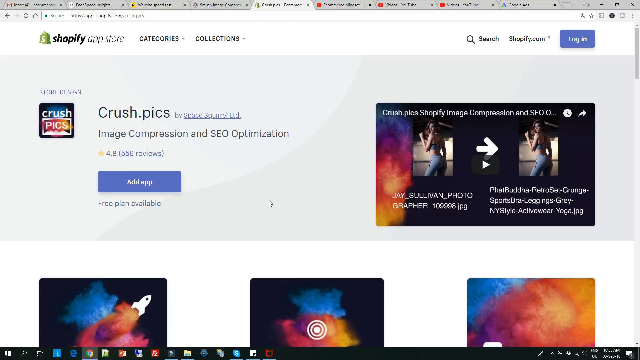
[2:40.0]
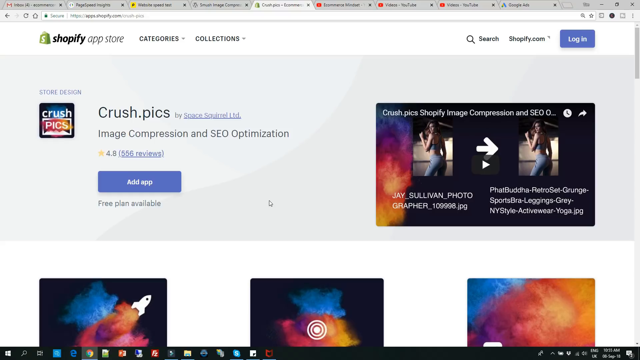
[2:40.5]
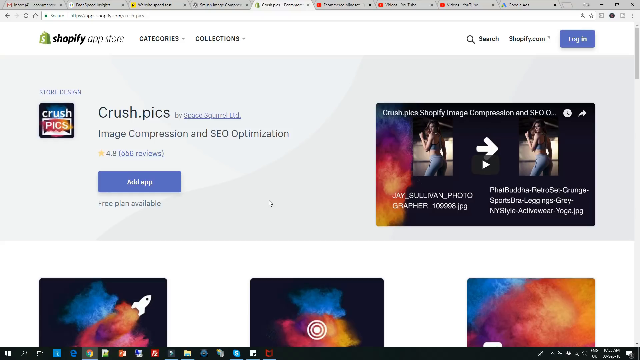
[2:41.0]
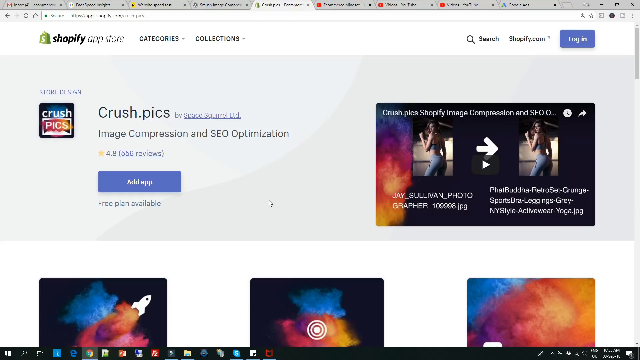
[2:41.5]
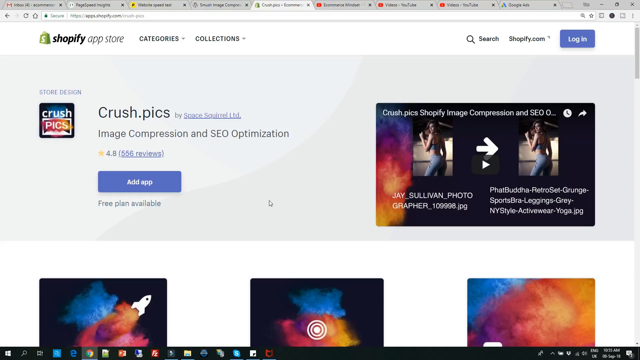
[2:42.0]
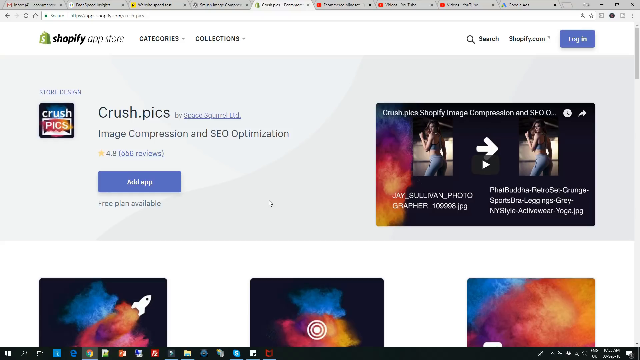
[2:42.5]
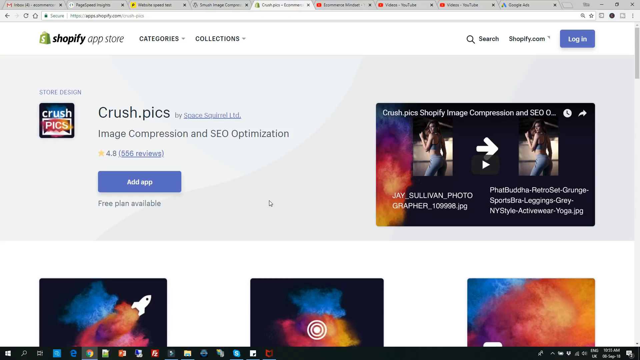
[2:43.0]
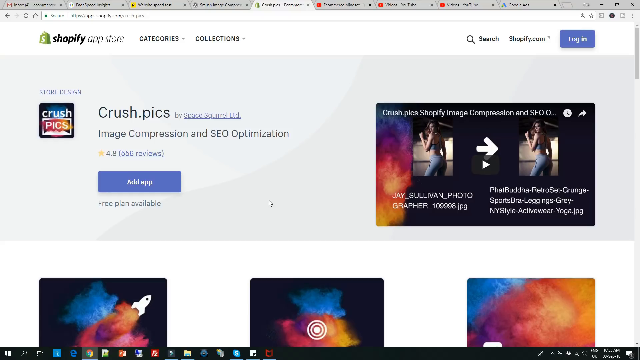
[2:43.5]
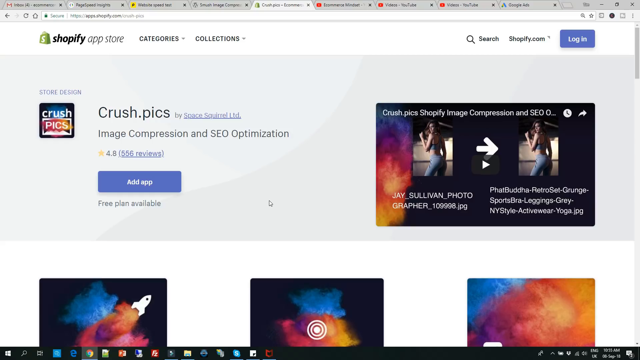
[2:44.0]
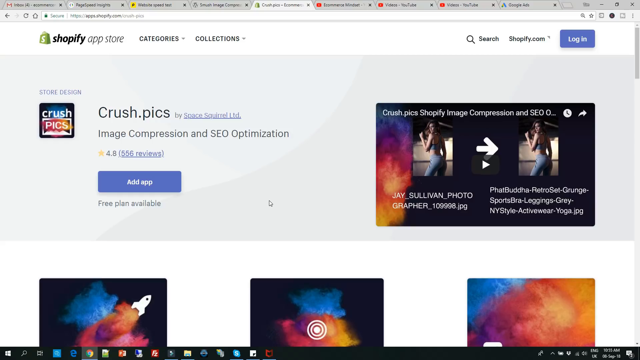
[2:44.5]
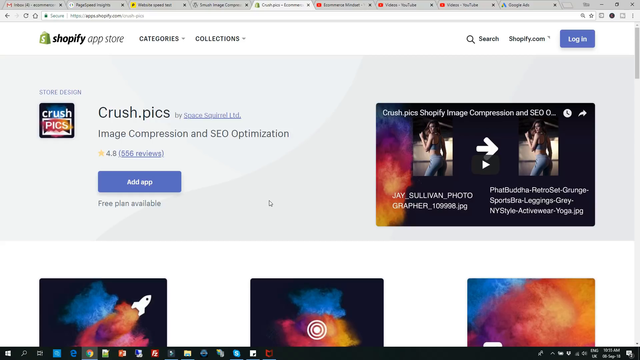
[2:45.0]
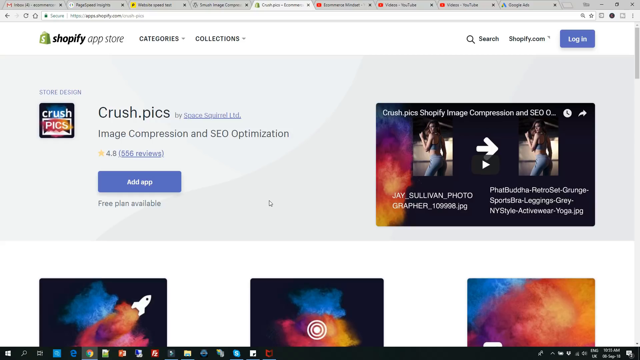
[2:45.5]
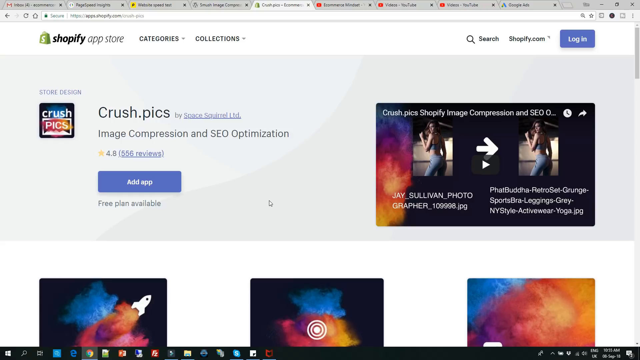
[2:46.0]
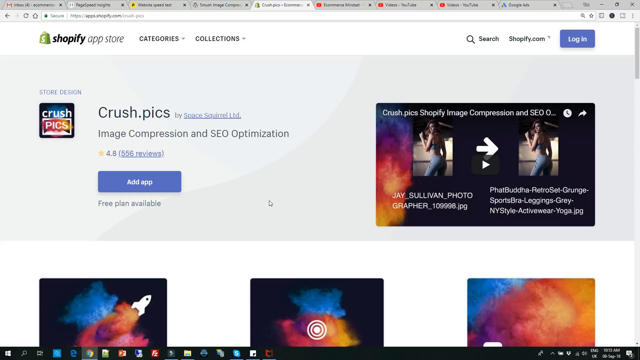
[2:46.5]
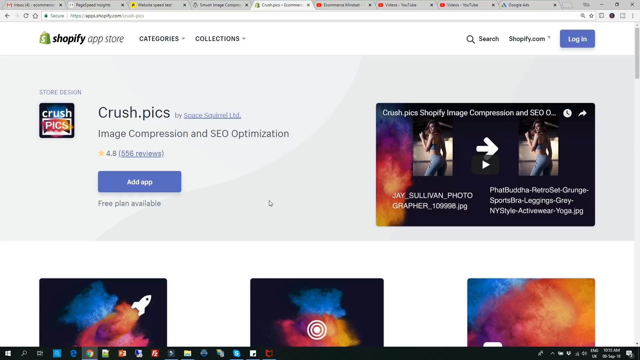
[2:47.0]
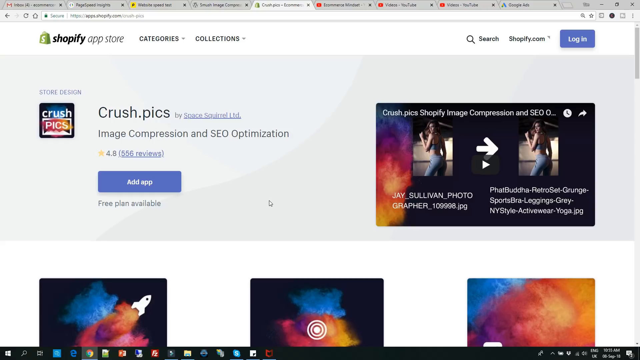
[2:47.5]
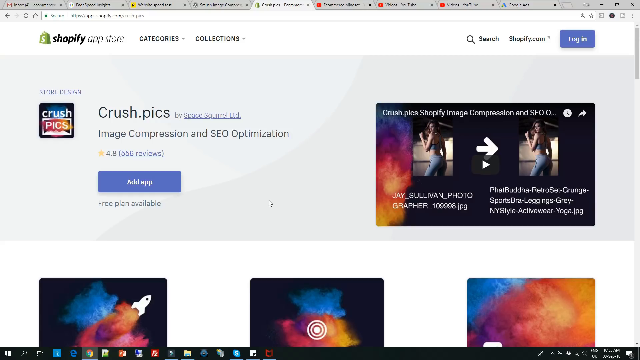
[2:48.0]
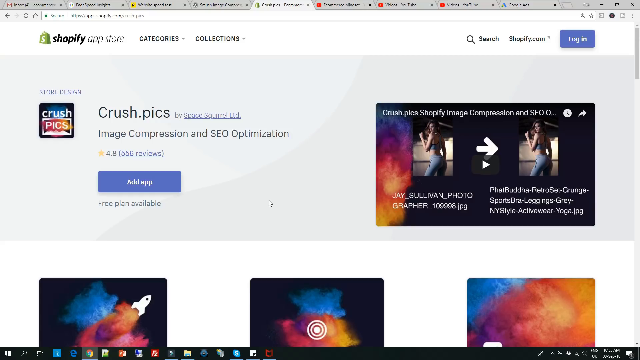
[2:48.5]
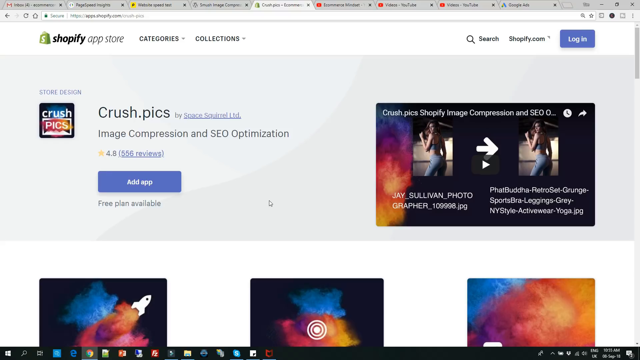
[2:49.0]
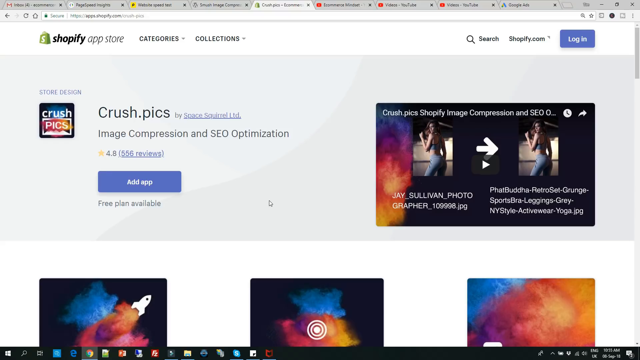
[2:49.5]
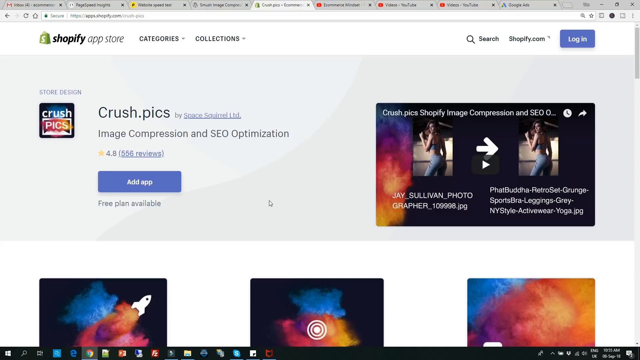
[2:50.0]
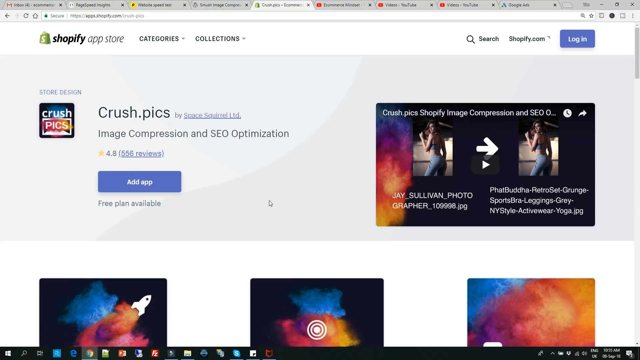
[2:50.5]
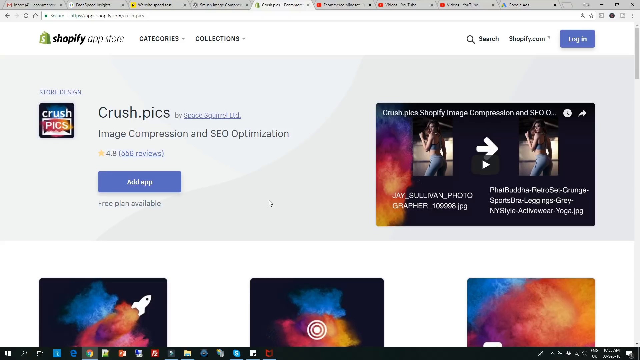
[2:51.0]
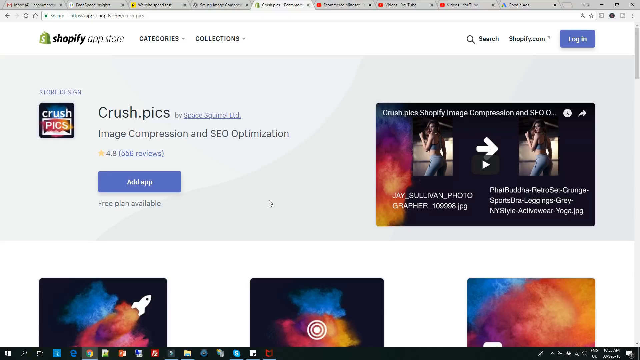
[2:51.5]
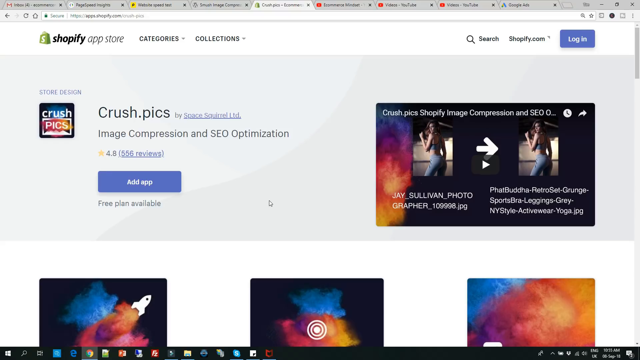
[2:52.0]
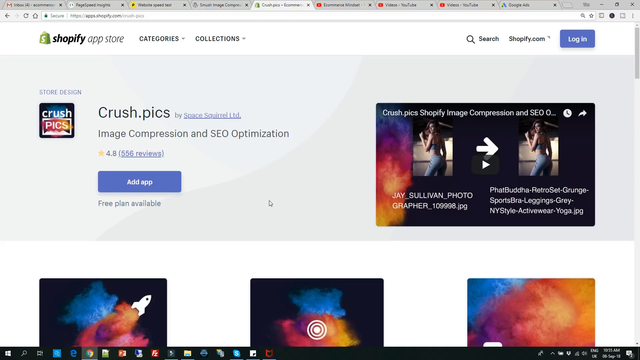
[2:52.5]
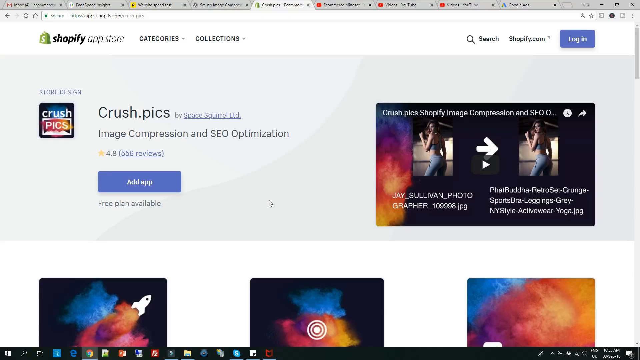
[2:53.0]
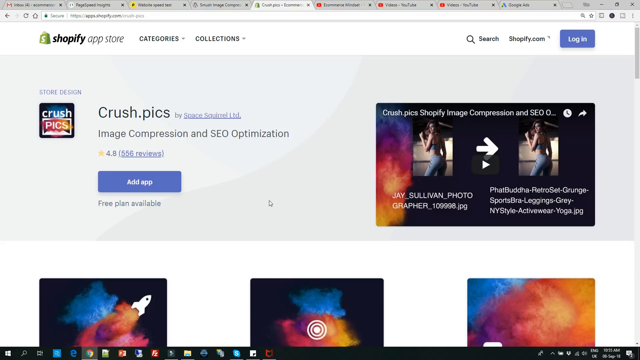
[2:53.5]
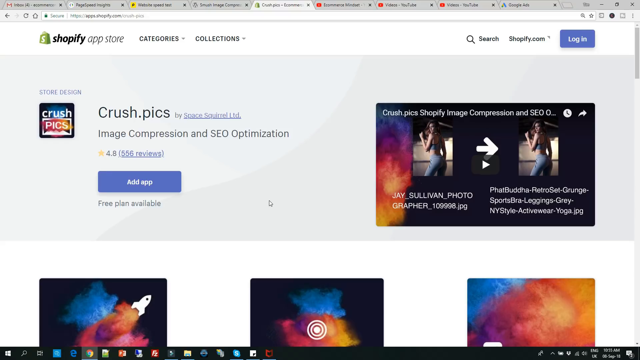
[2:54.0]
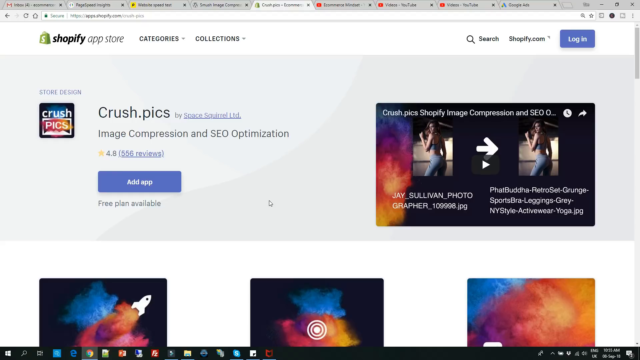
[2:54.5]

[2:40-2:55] With multiple tabs open on the computer, the Shopify app store website is on screen. The page shows store design and "CrushPix, image compression, SEO optimization", with an option to add the app. Nothing is clicked, and the screen stays on this Shopify app store page.